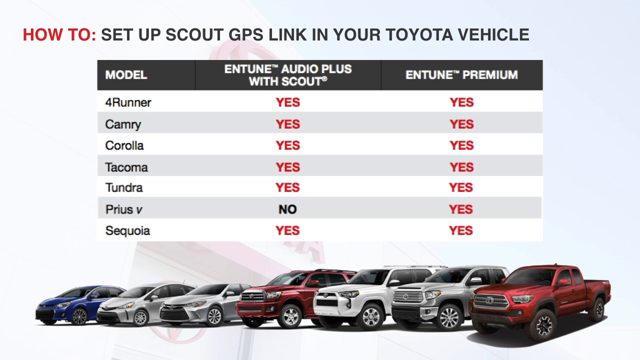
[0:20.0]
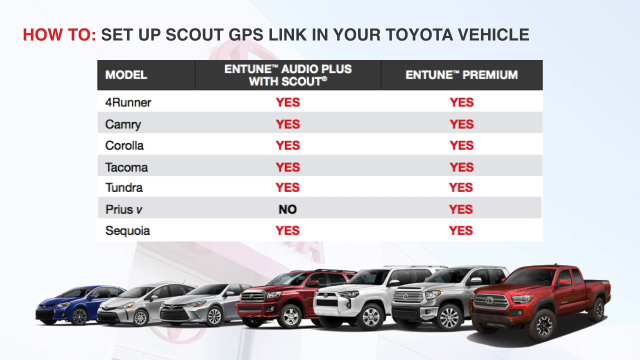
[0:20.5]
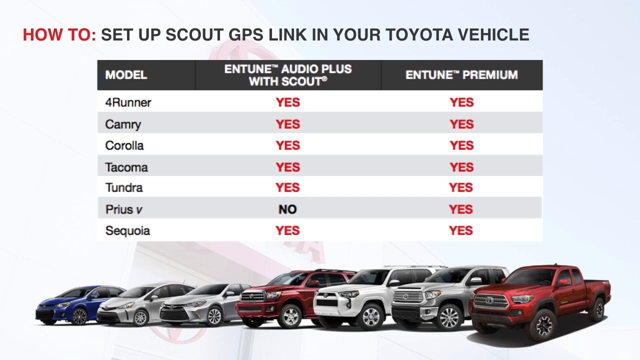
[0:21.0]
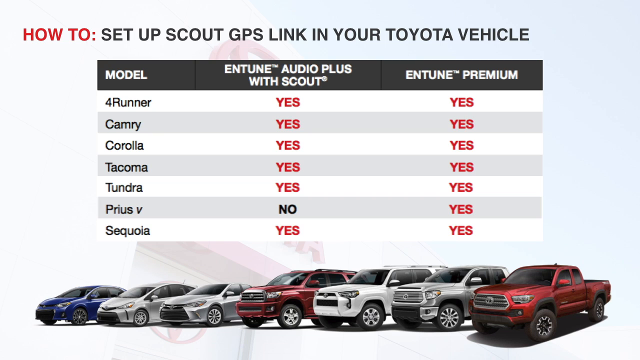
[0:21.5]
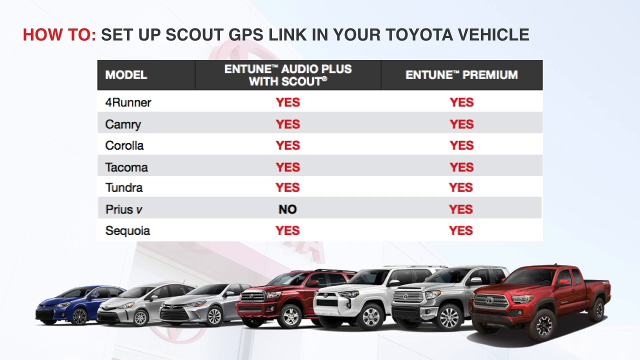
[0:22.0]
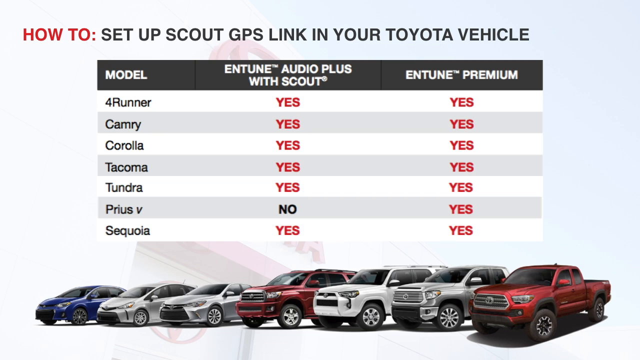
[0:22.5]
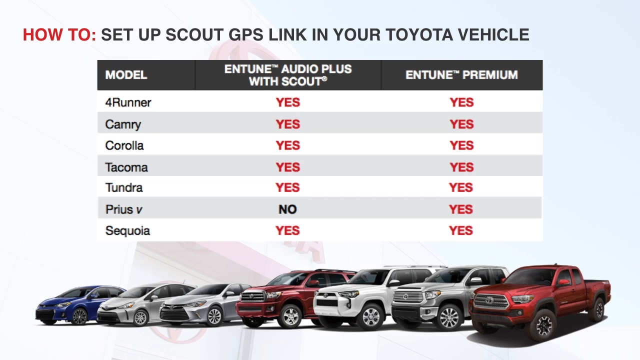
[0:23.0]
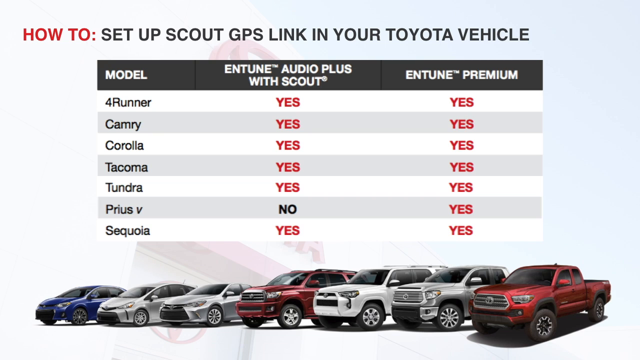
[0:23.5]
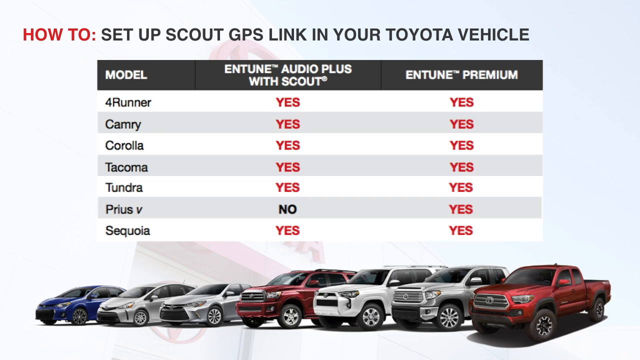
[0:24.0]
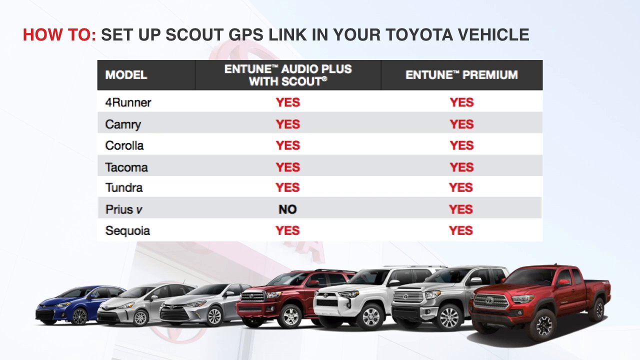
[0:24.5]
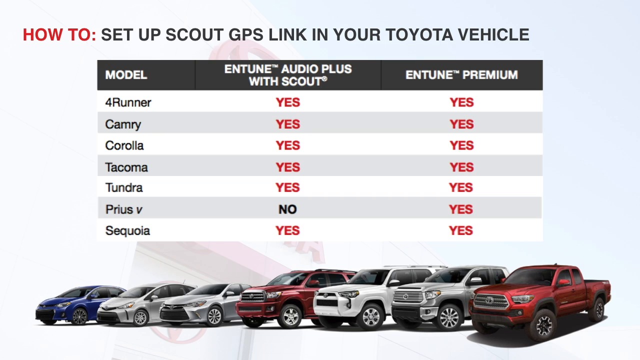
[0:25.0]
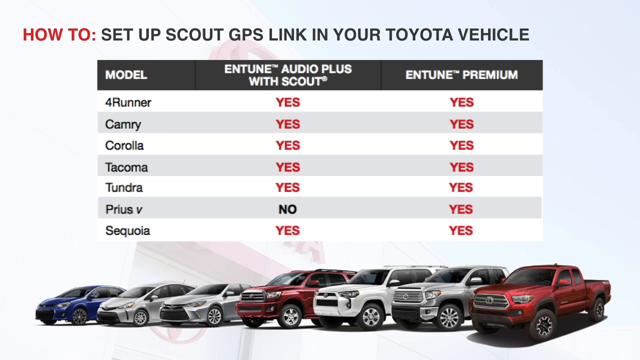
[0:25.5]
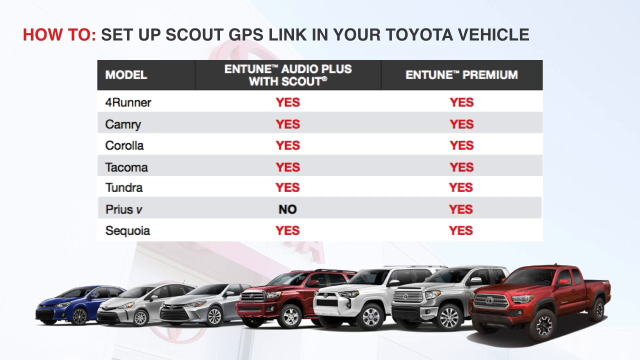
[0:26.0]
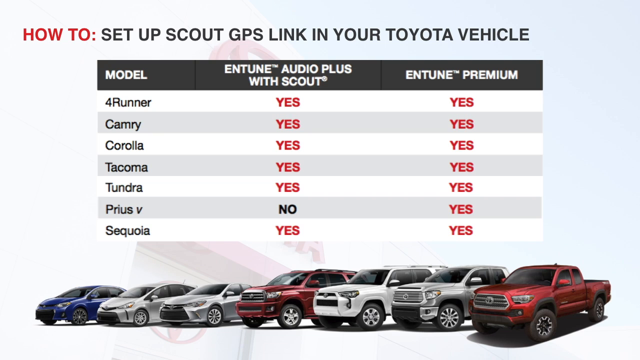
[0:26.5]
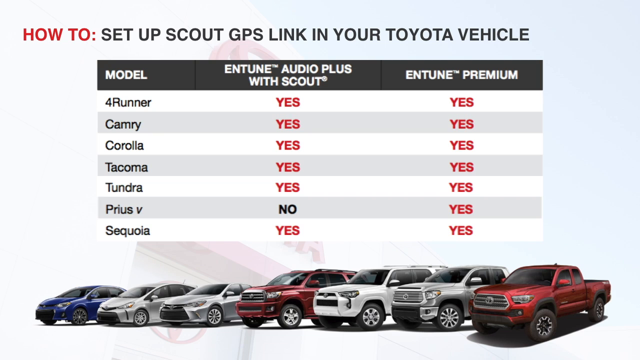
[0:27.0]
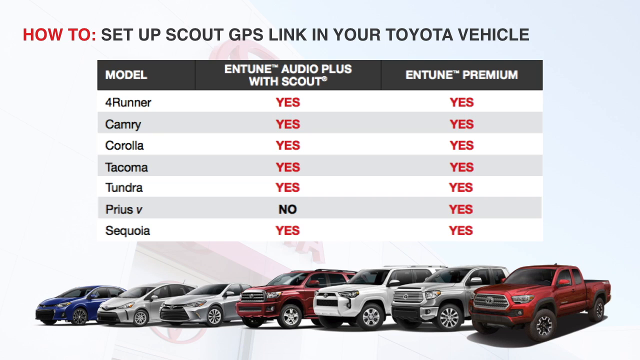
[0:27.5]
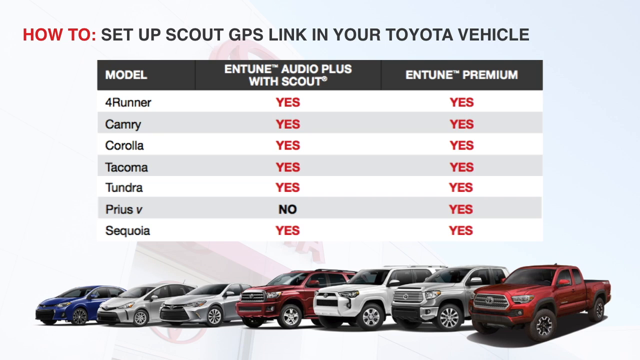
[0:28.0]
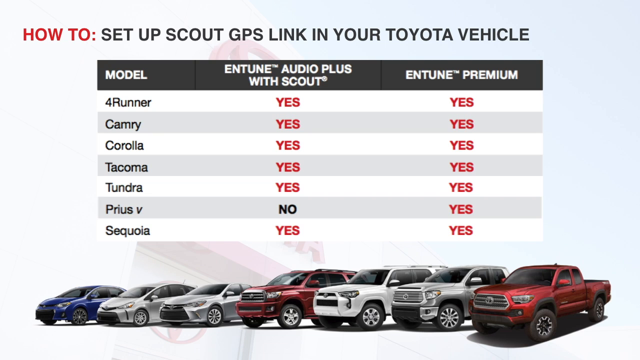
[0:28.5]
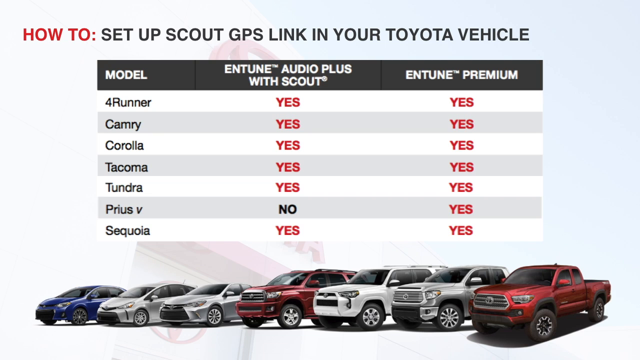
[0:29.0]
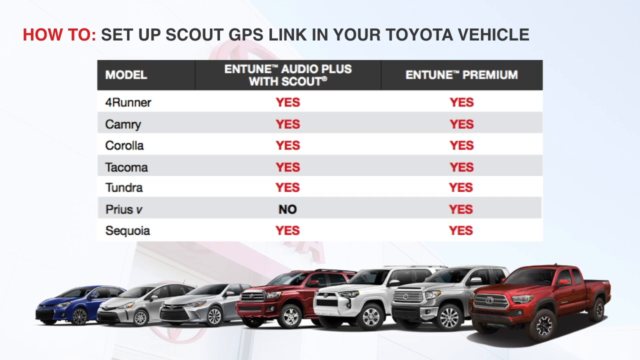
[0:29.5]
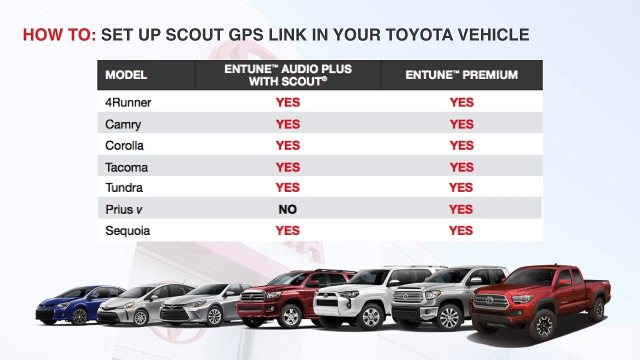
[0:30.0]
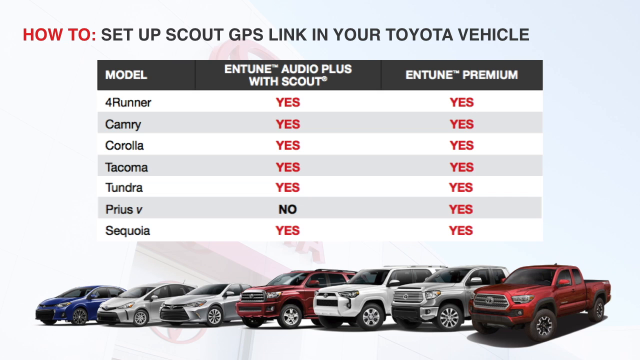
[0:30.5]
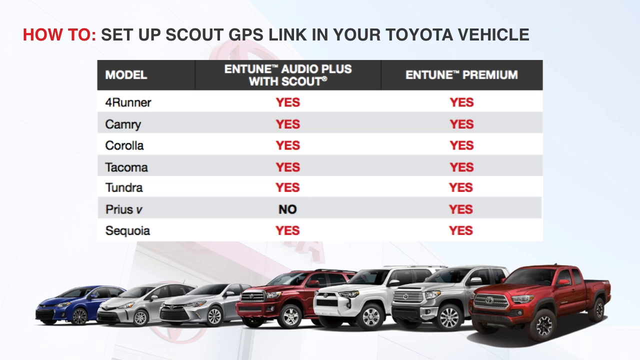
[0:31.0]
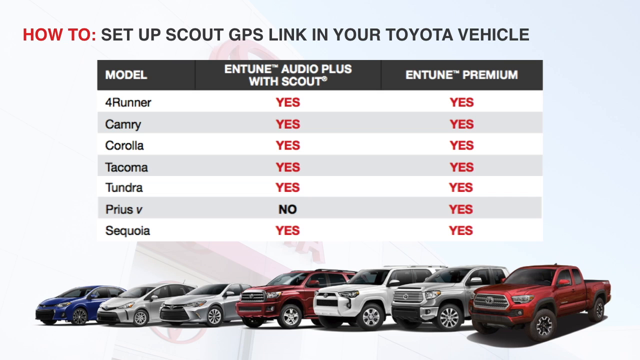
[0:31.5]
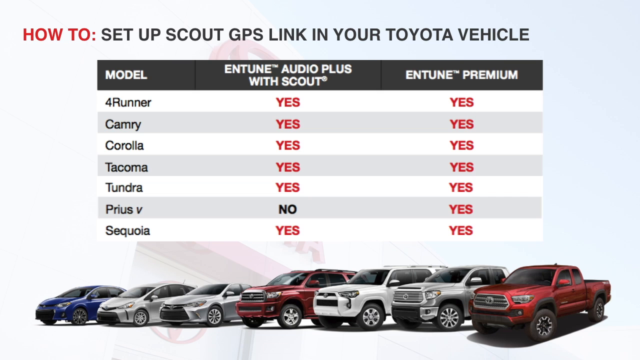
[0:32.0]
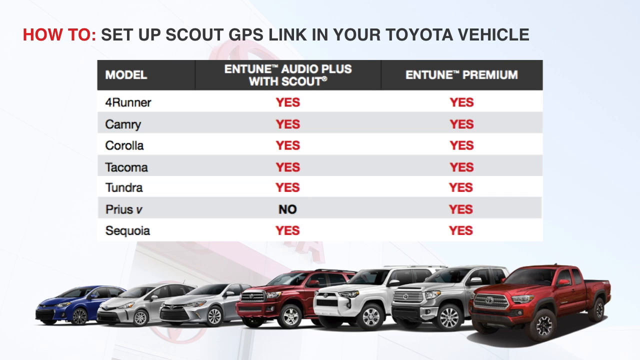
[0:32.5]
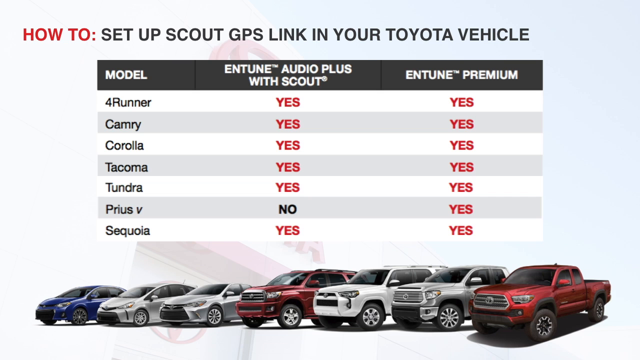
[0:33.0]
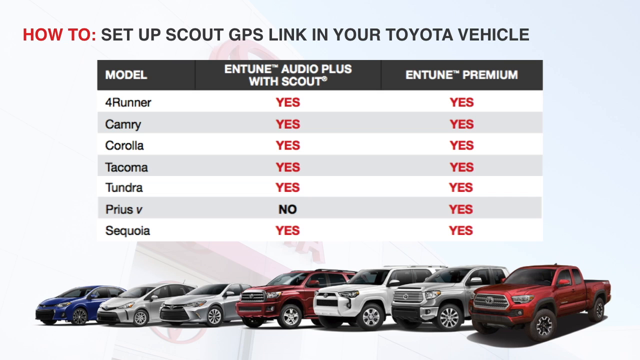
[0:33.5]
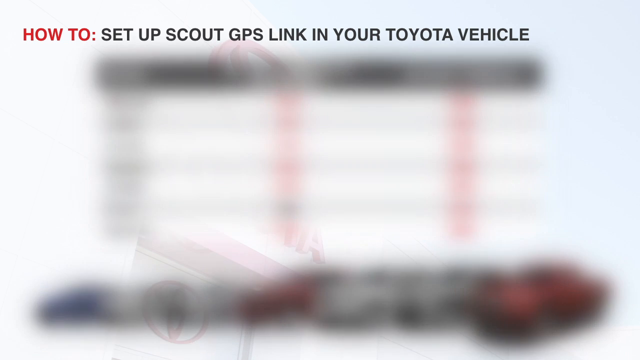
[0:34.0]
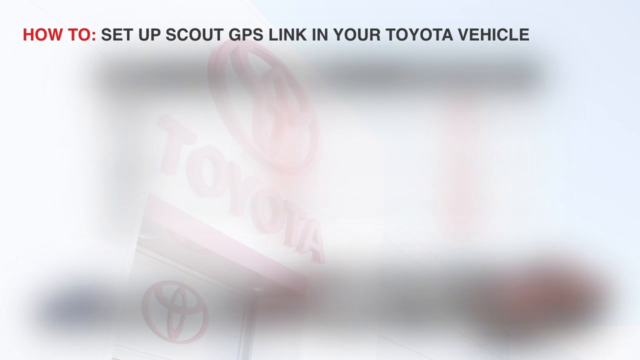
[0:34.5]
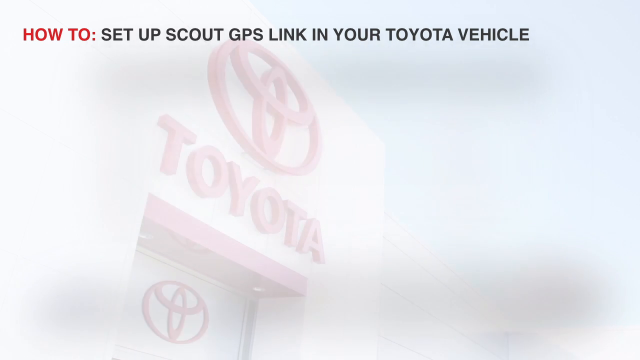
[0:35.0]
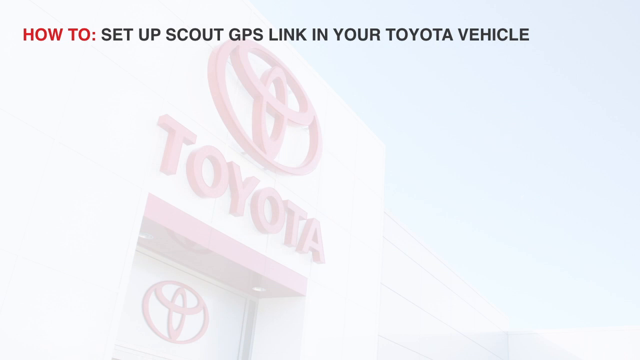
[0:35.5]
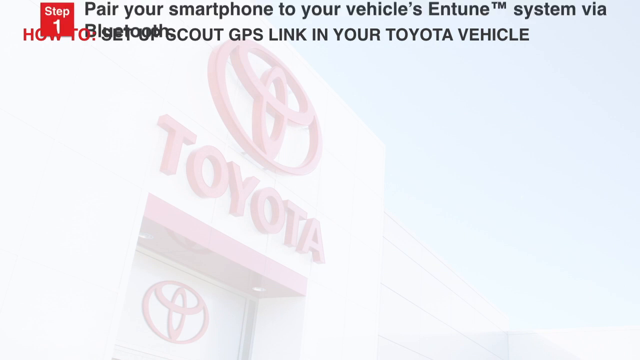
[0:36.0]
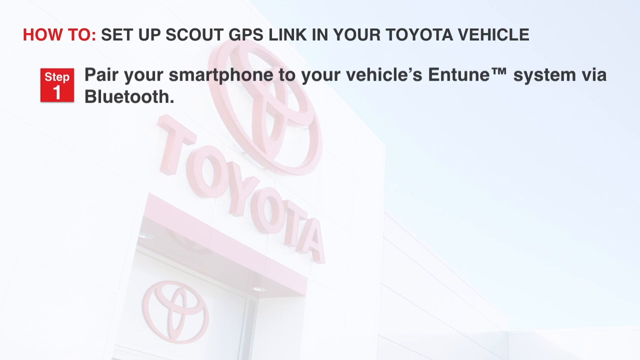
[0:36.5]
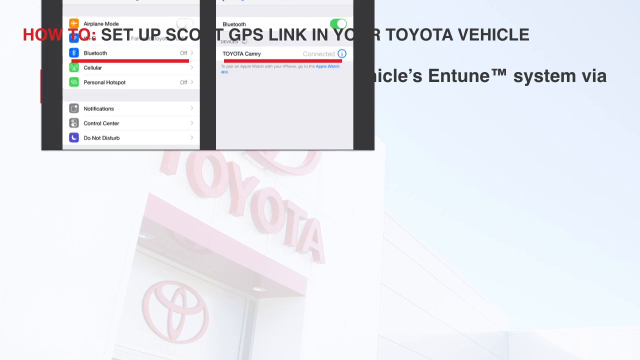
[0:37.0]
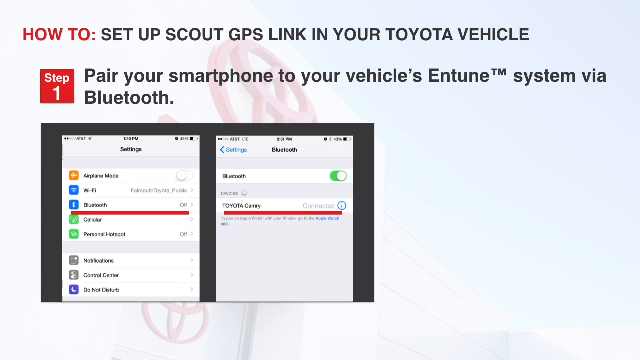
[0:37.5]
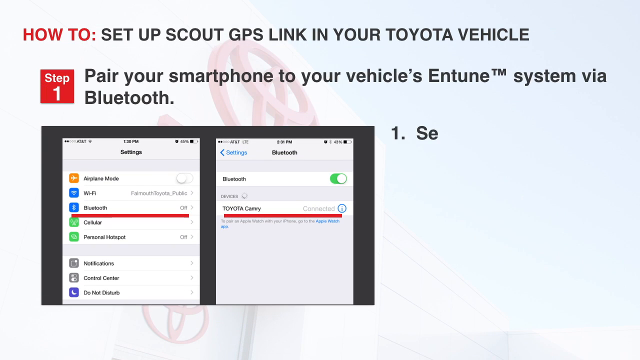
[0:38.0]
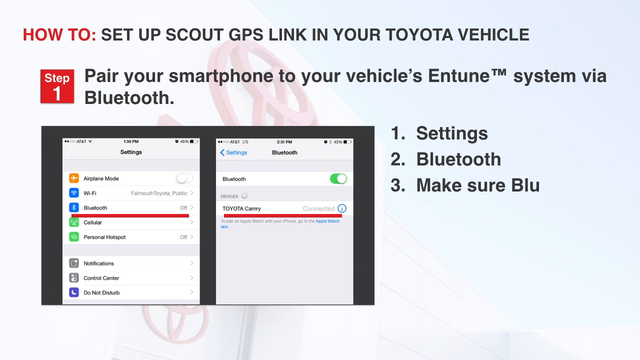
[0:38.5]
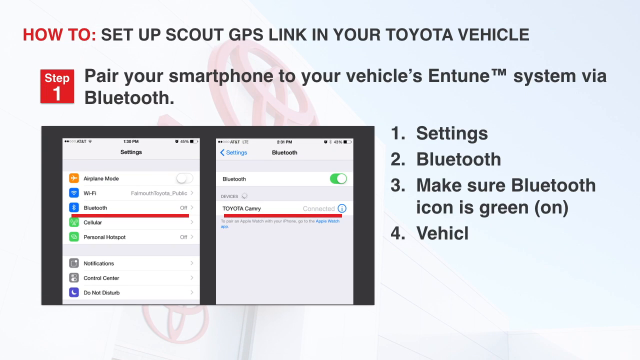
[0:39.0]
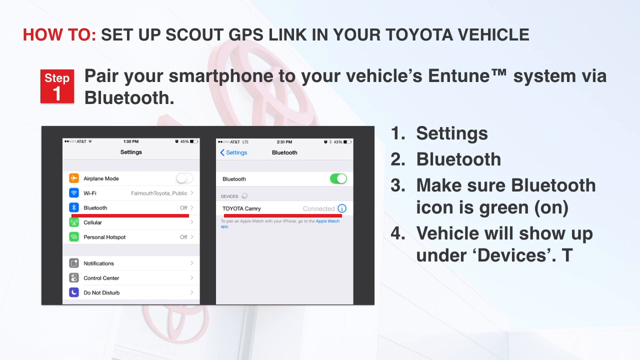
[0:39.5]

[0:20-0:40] The comparison chart remains on screen. For each model it says either yes or no under Entune Audio Plus with Scout and Entune Premium. Every entry says yes except for the Prius V, which says no in the Entune Audio Plus with Scout column; every other model has both. The presentation then transitions to its next part, showing "Step 1" at the top left.